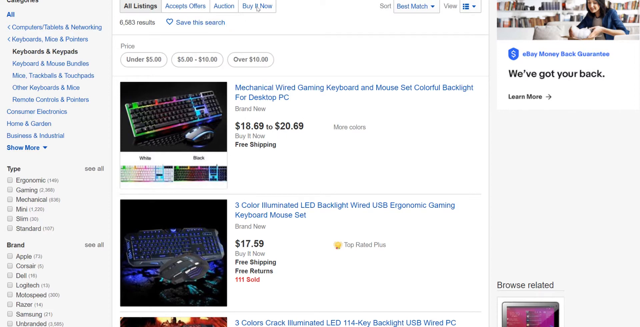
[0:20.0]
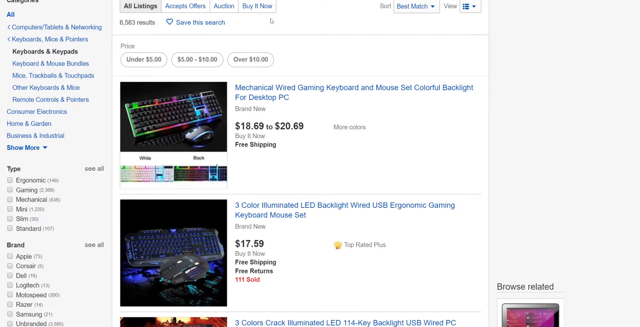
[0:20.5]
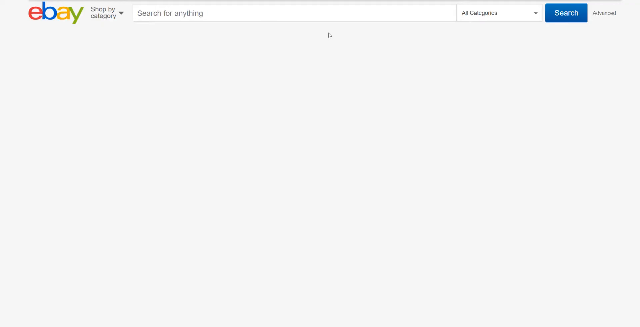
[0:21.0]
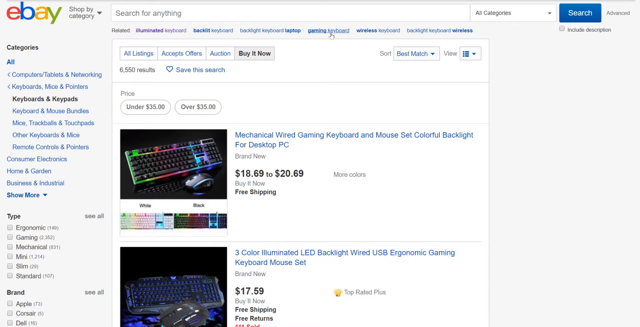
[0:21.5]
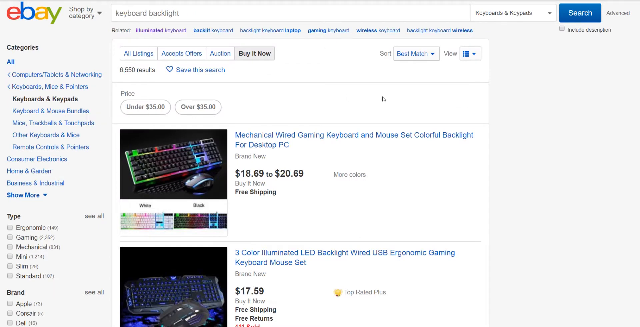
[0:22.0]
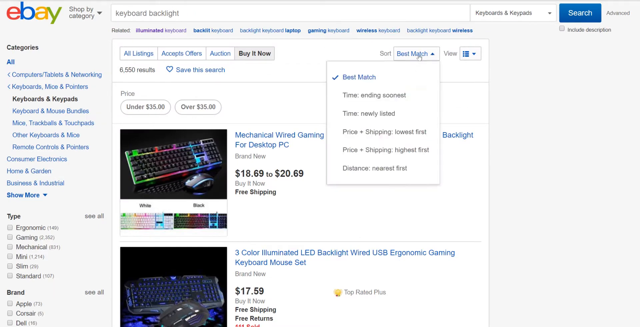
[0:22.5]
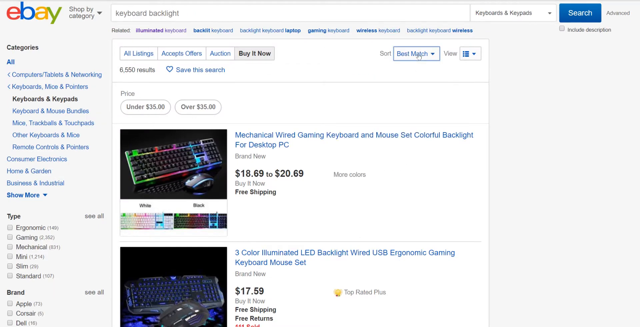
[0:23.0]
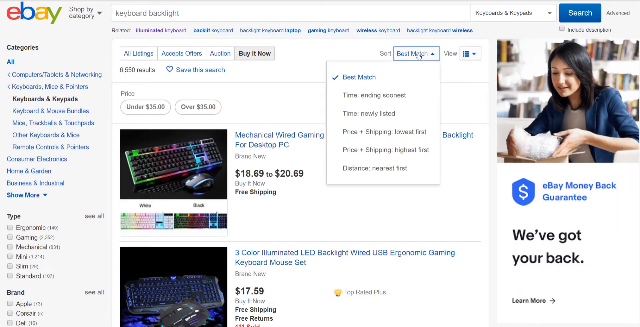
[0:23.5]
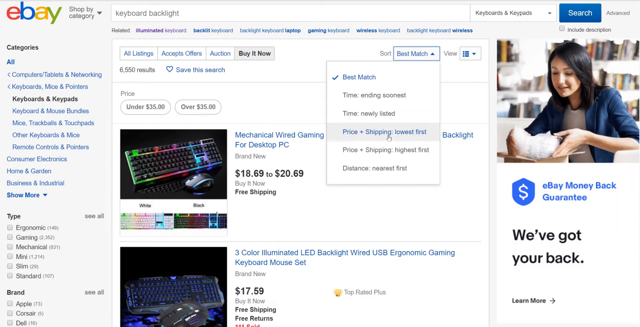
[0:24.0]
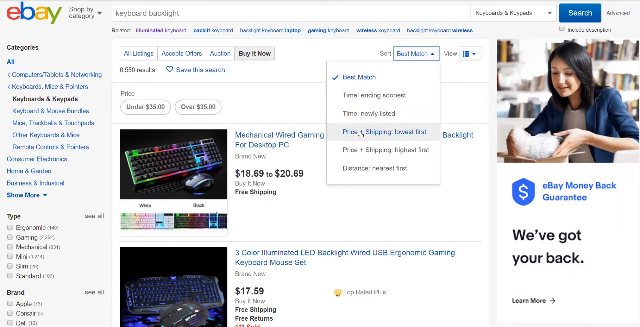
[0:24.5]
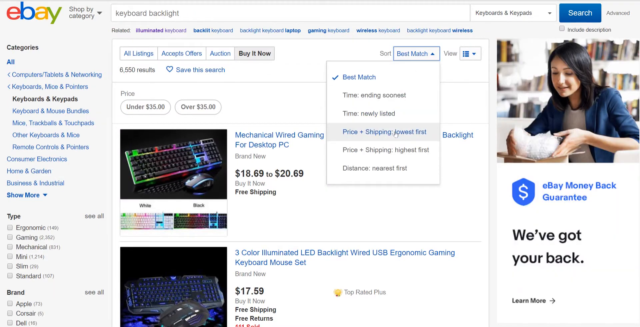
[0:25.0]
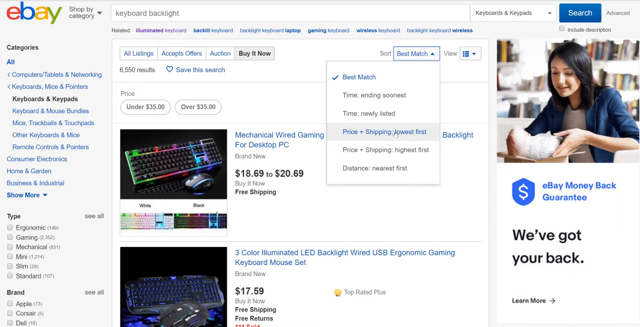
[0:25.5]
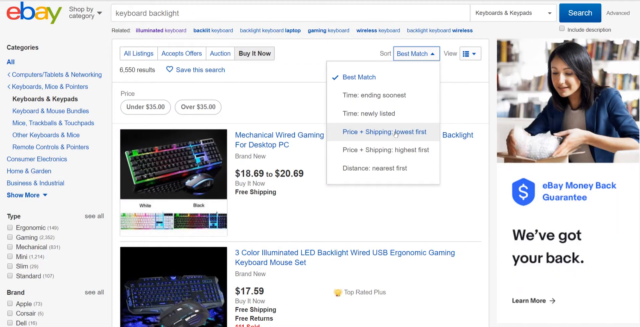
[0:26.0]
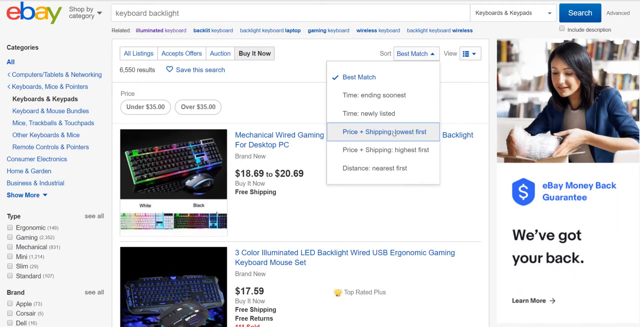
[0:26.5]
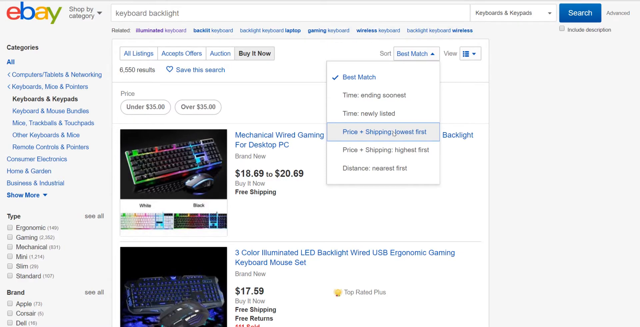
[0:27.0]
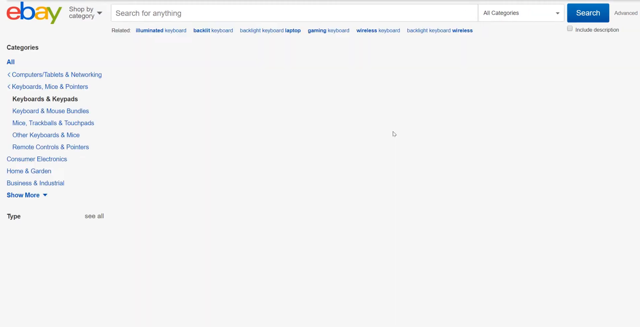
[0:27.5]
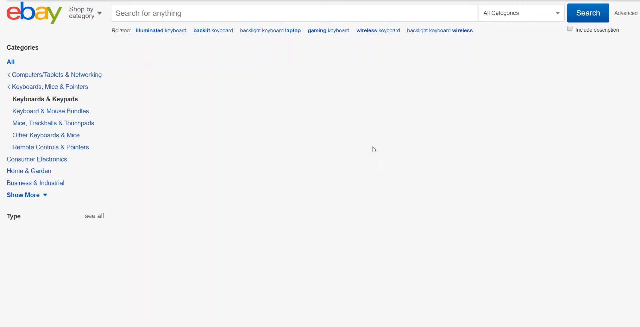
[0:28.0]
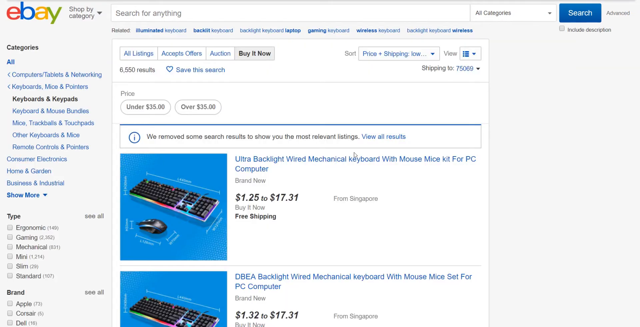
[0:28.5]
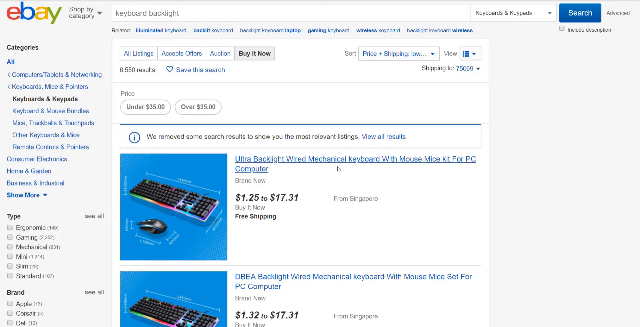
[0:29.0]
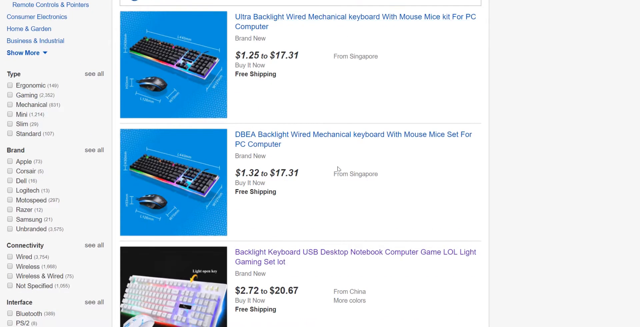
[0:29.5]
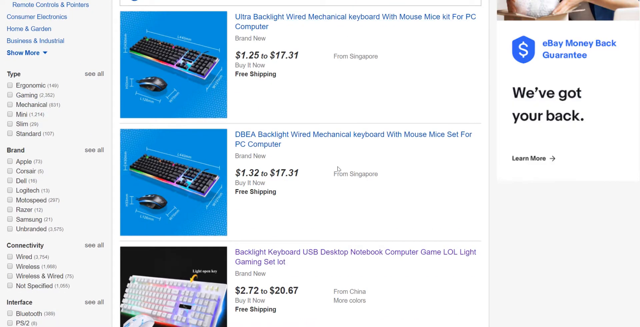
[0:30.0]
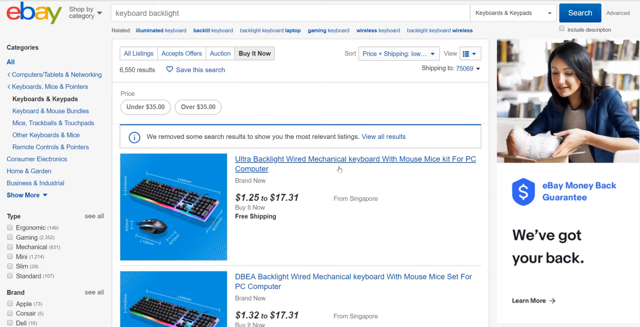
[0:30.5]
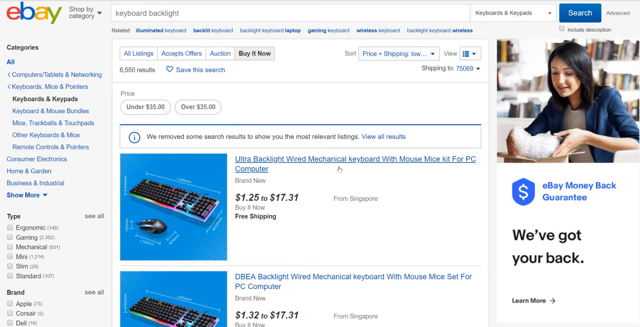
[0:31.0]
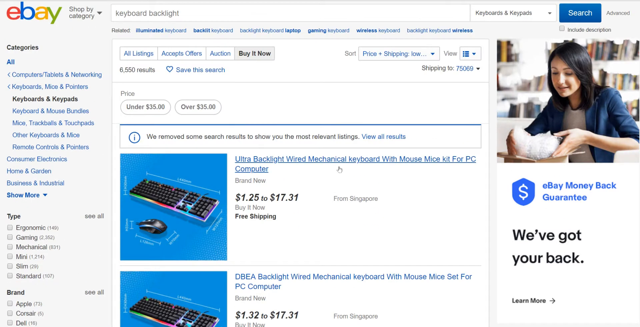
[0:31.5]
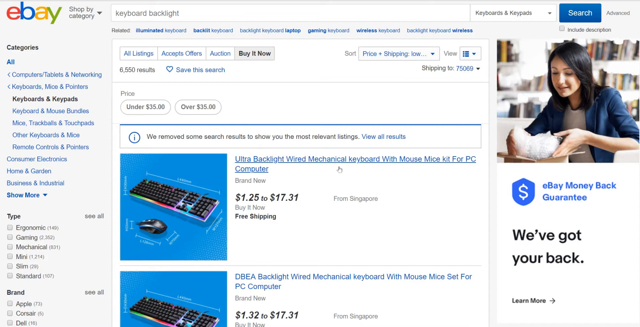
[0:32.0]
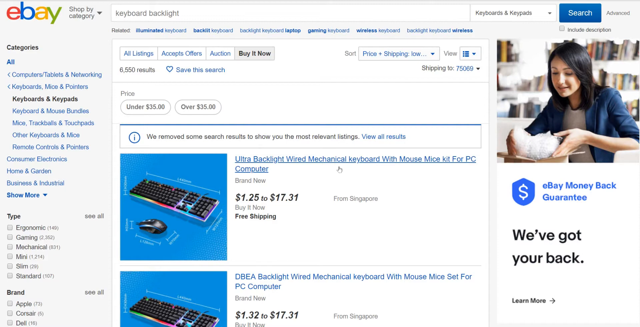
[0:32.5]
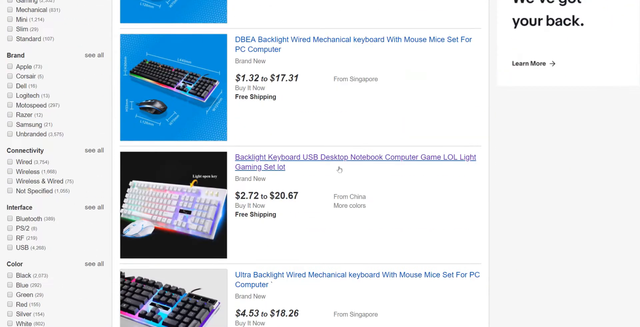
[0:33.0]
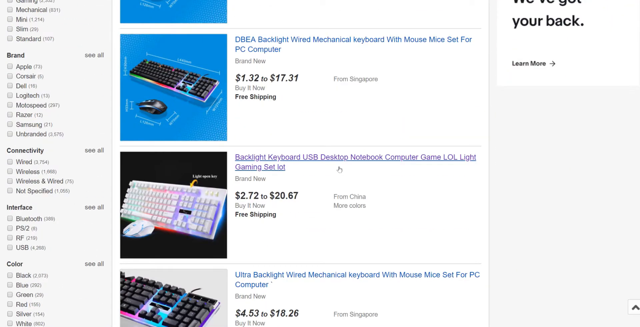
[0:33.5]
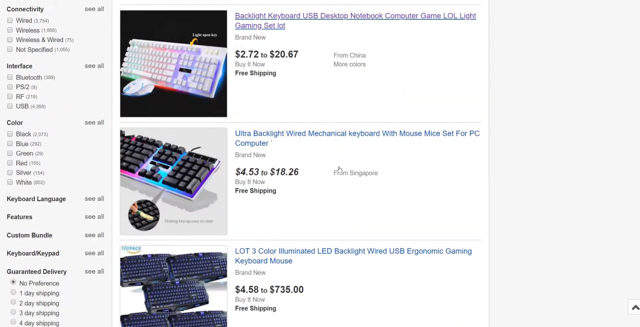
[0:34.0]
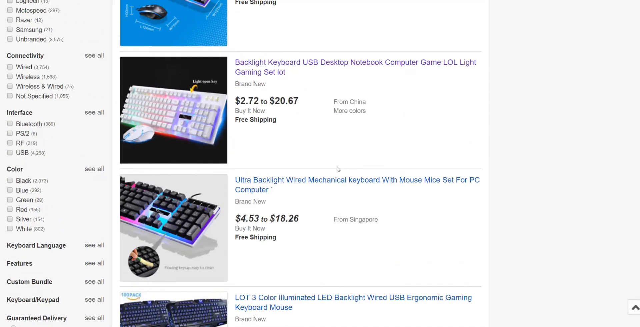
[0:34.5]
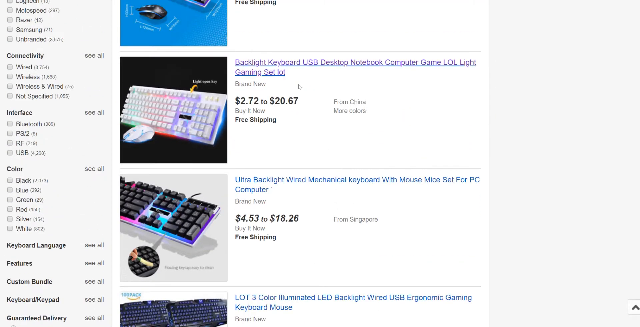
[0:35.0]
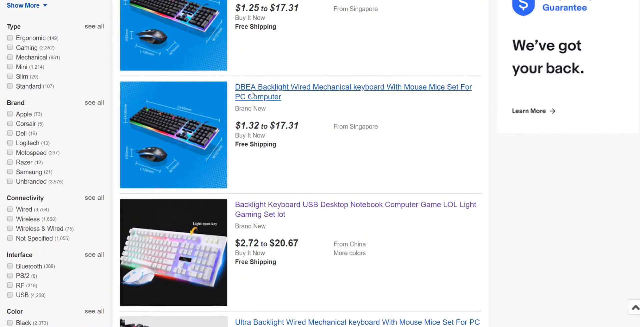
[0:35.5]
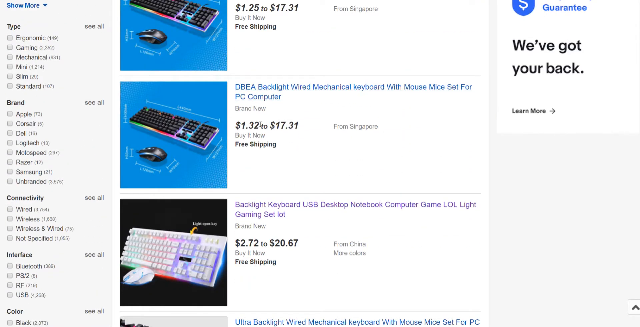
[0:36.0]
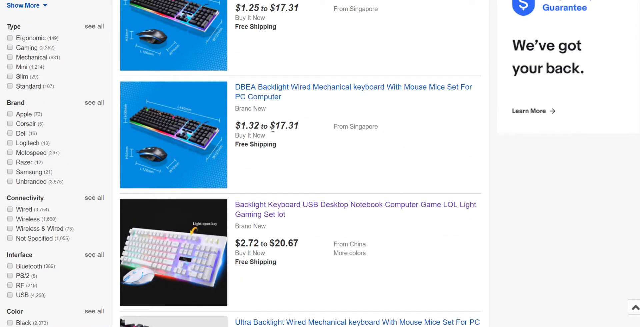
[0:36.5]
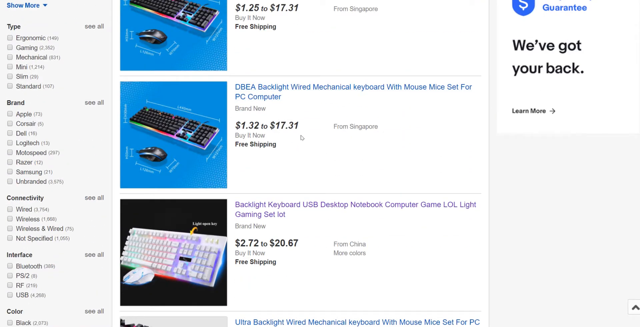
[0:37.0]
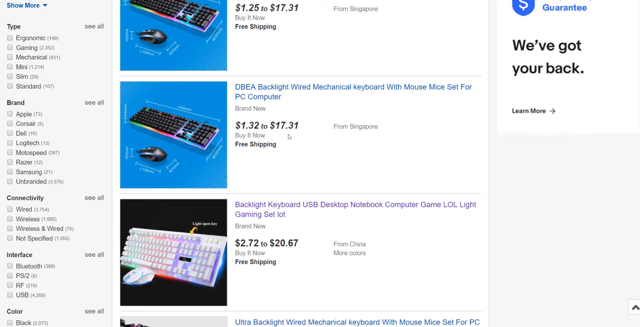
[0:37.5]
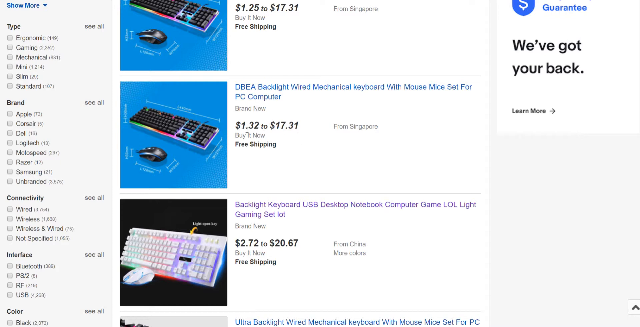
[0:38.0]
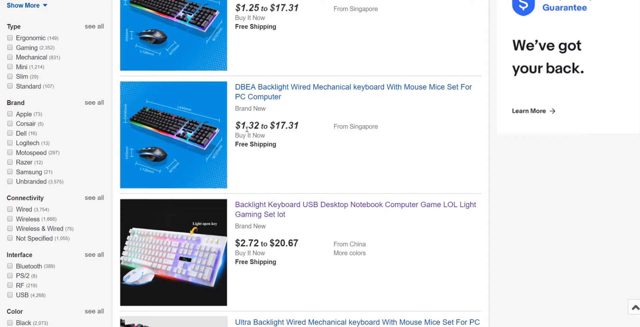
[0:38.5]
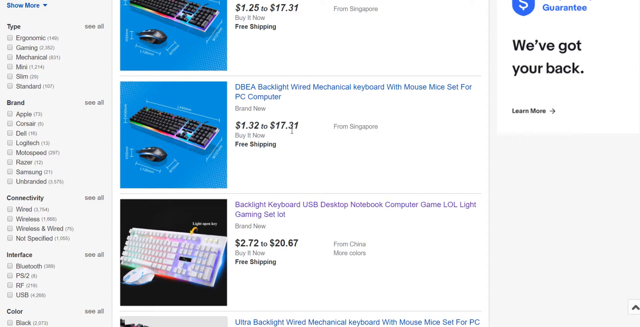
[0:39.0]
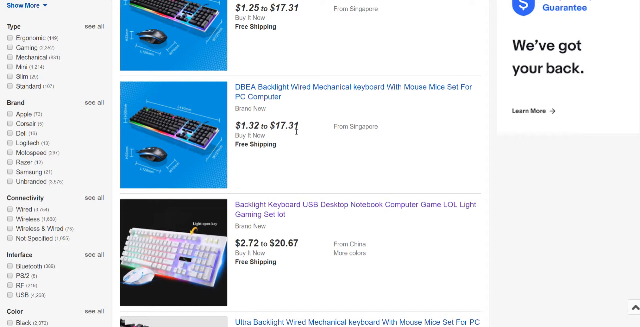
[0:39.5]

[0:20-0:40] After selecting buy it now, the person clicks the button next to sort, which says "best match." The menu also lists "time ending soonest," "time newly listed," "price plus shipping lowest first," "price plus shipping highest first" and "distance nearest first." The screen refreshes with different backlit keyboard results under the price plus shipping lowest sort. The first is an "ultra backlight wired mechanical keyboard with mouse mice kit fix for PC computer." They scroll down and show the pricing on a different, fairly low-priced keyboard, from $1.72 to another amount; the highest price for that keyboard appears to be $17.31. The listings state where the items are from, in this case Singapore, and that shipping is free. The person seems to be showing the different filters available on eBay.